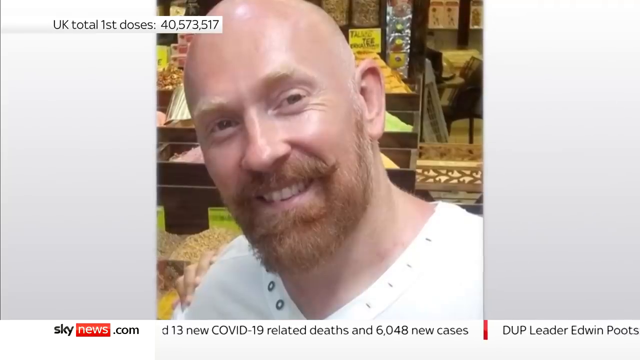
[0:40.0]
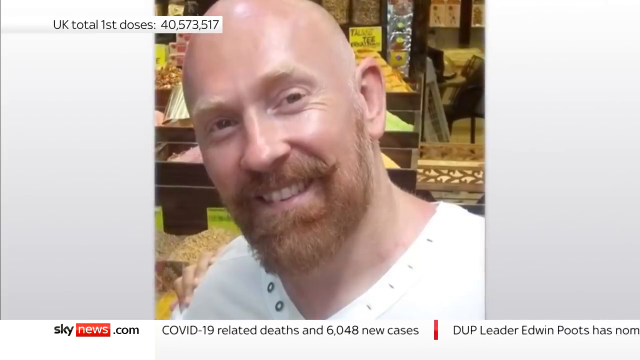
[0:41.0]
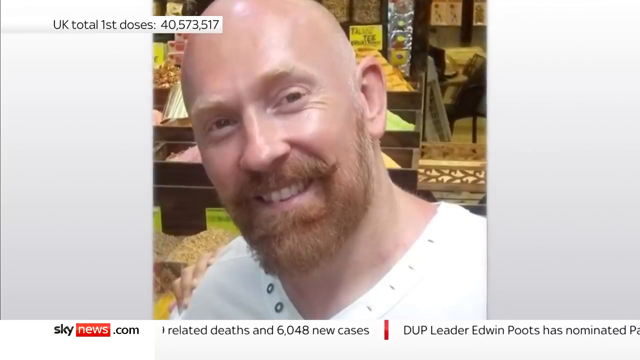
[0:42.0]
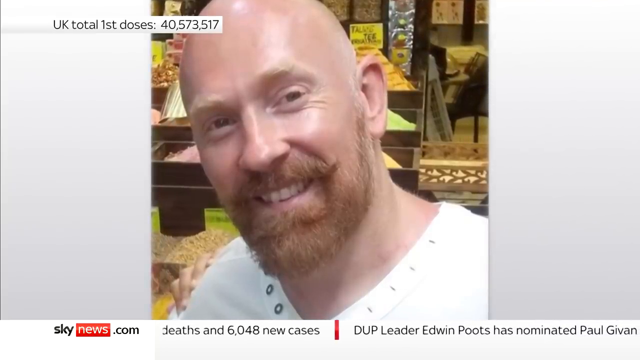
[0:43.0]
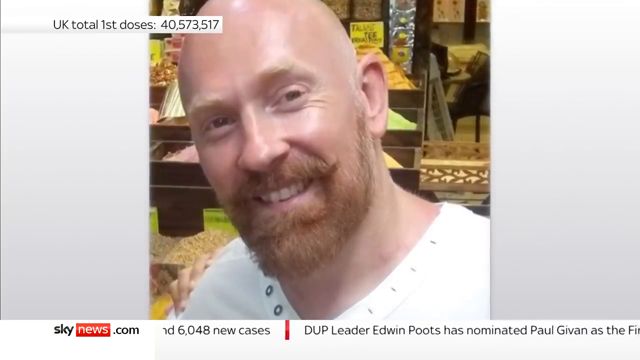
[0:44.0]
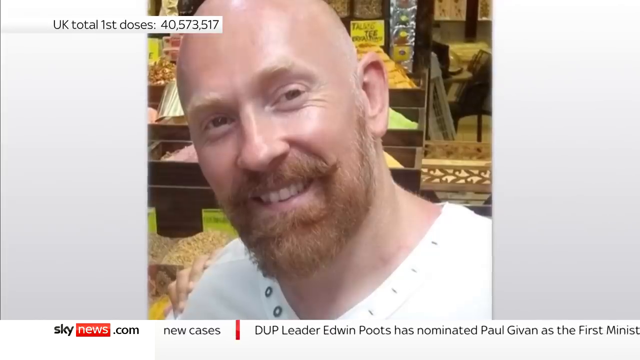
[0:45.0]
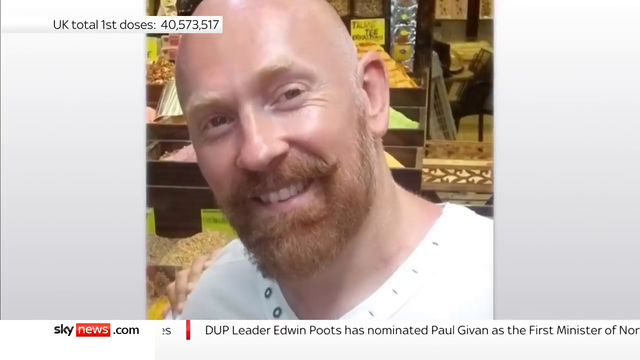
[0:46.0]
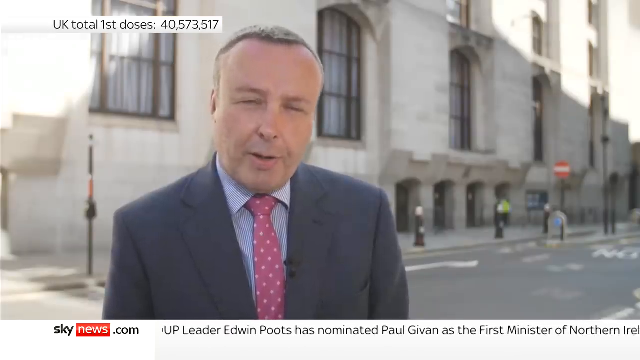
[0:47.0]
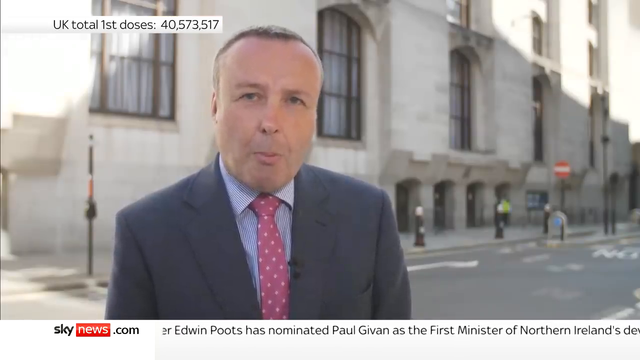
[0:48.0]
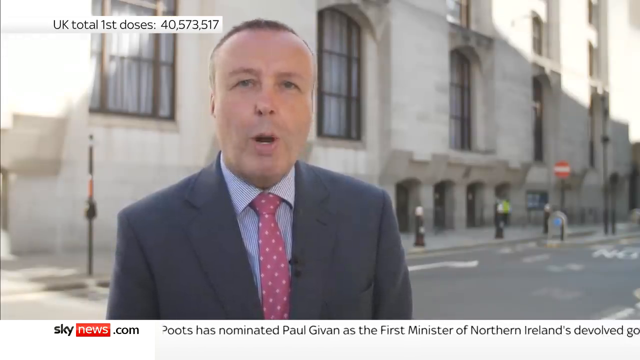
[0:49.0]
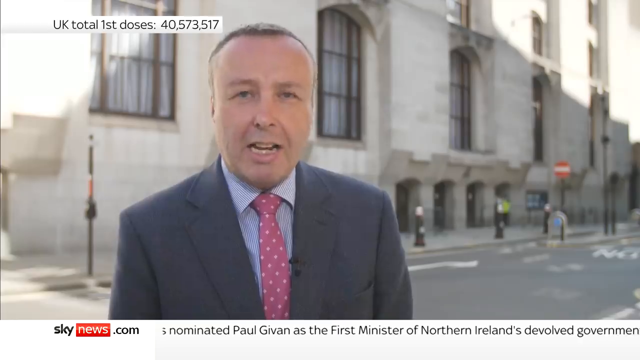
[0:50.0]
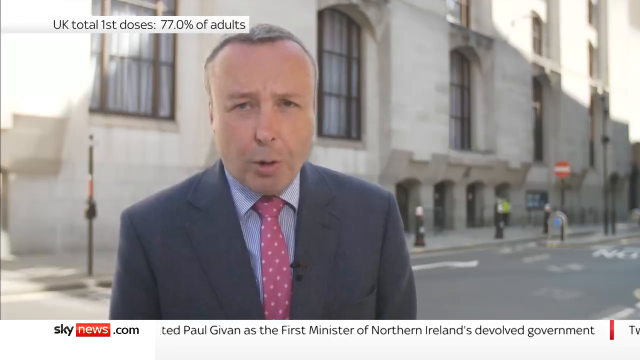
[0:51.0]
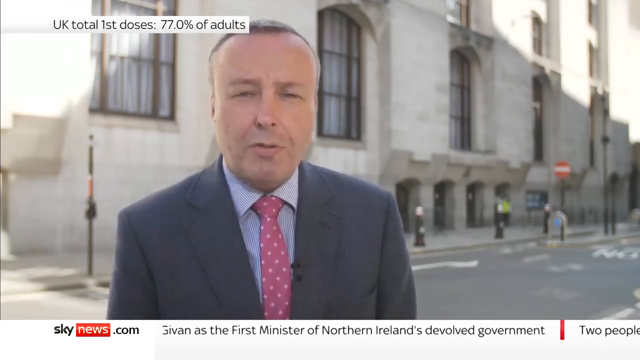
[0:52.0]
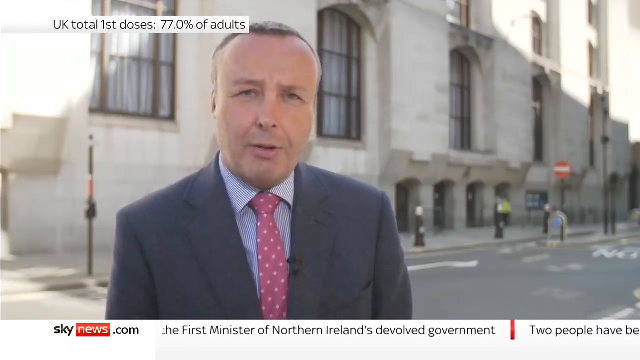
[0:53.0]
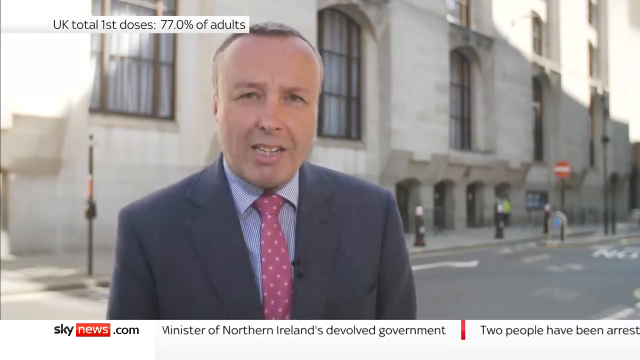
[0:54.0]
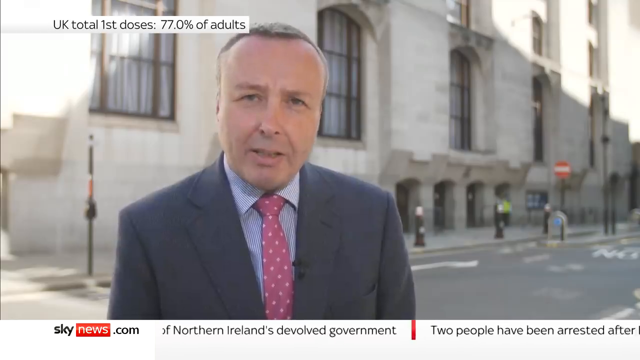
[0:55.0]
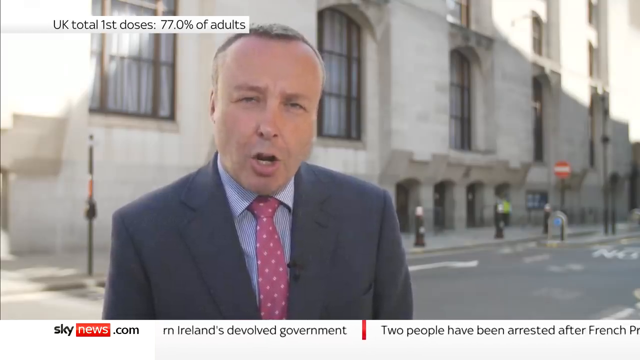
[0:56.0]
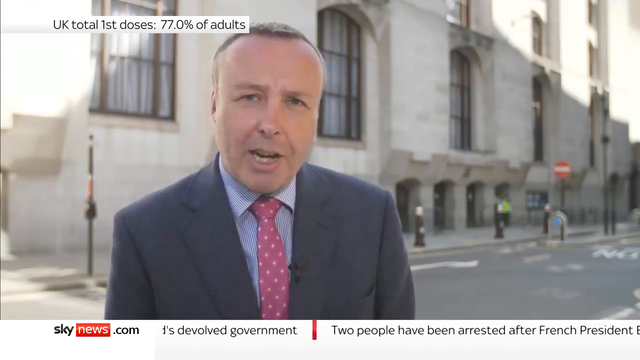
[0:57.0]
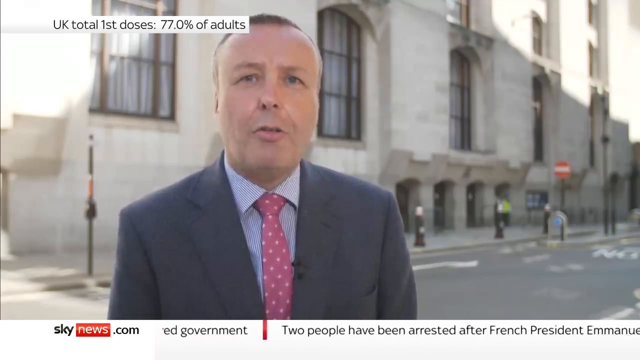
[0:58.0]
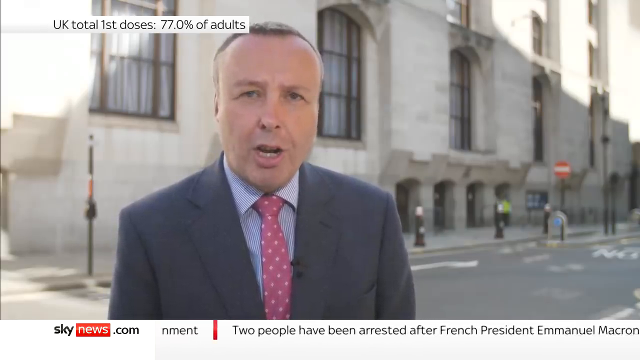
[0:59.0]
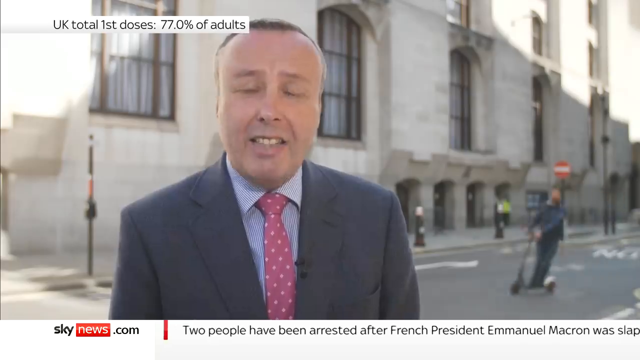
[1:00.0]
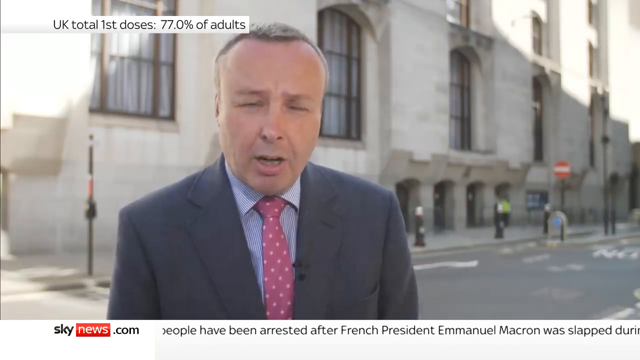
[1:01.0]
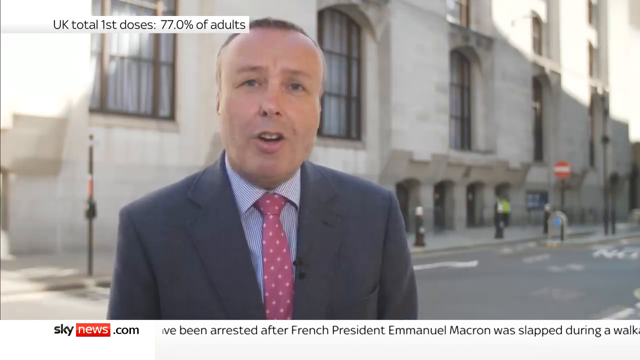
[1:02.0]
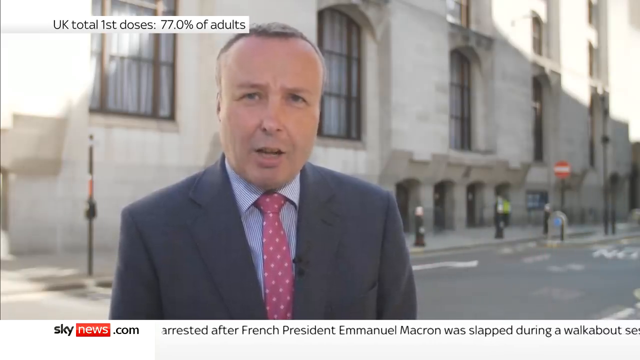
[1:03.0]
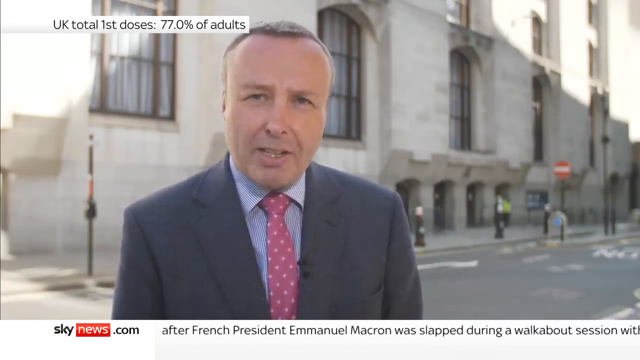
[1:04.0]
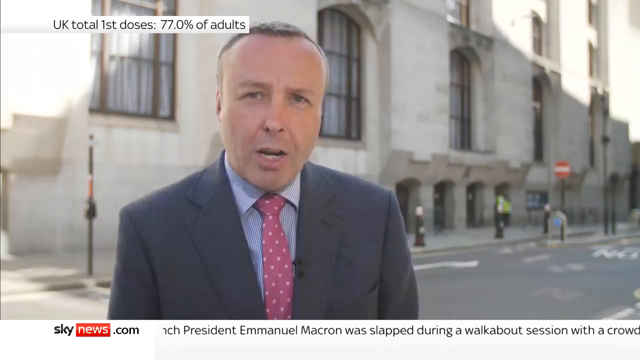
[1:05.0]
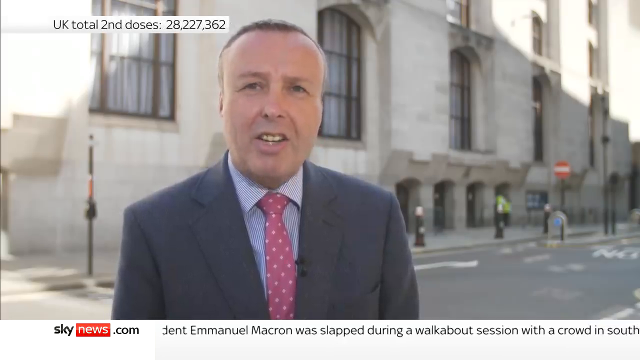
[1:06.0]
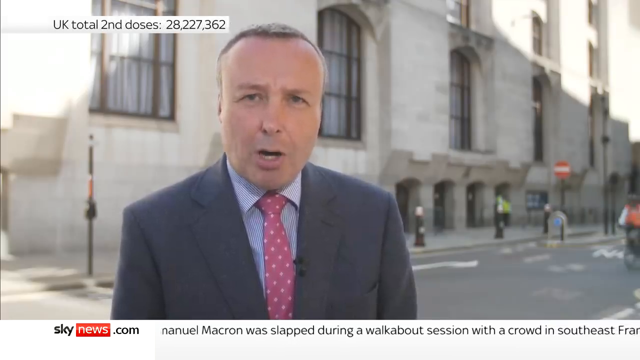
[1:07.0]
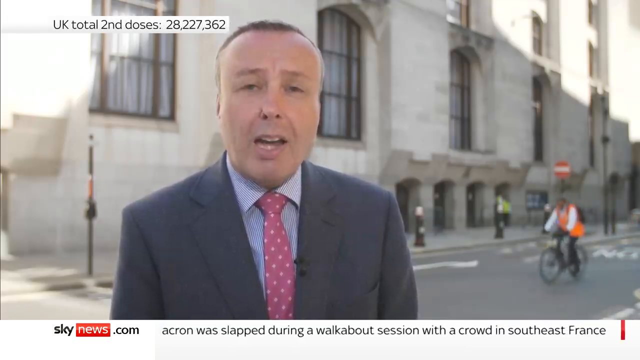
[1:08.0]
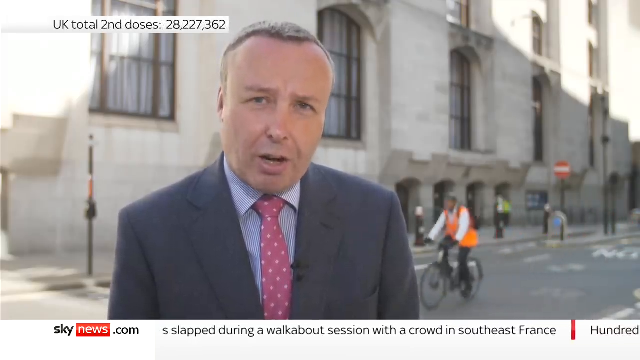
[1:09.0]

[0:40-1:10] The bald man with the red beard and mustache appears to be the subject of a Sky News report. A news anchor wears a pink tie, a blue suit and a light blue striped collared shirt. In the background someone rides a scooter, a man rides a bike, and another crossing guard or officer is posted up. There is a ticker along the bottom, and the footage is from Sky News. The scene seems to be in front of some sort of building, possibly a court or a prison; it looks like a government building.